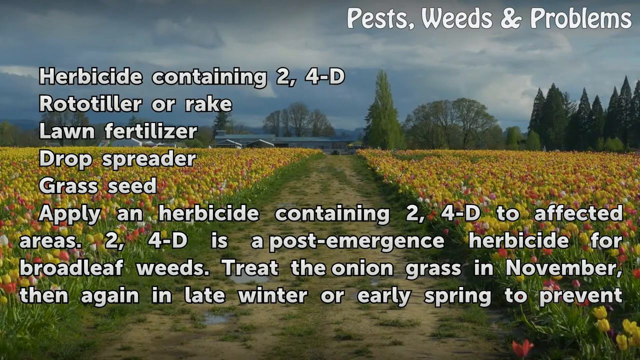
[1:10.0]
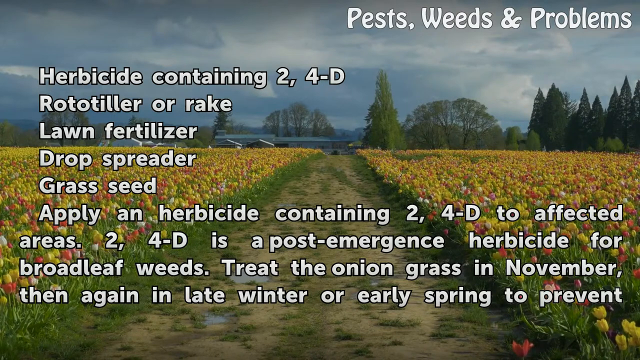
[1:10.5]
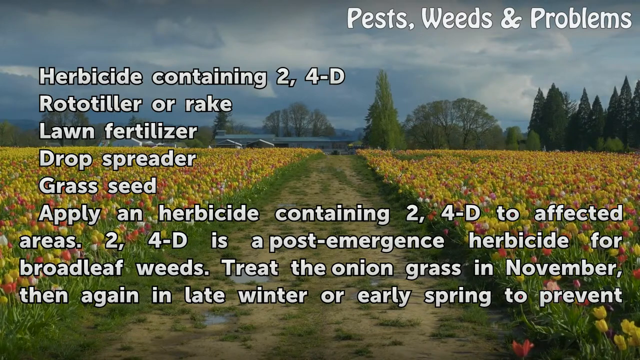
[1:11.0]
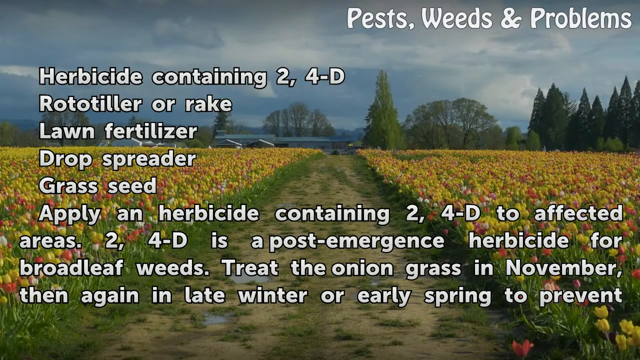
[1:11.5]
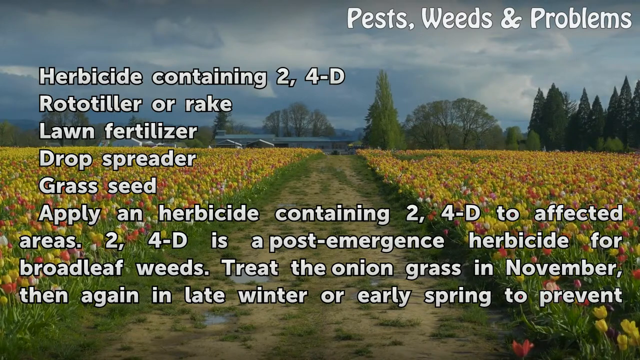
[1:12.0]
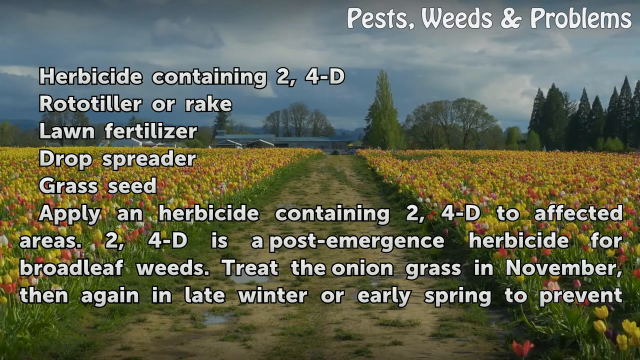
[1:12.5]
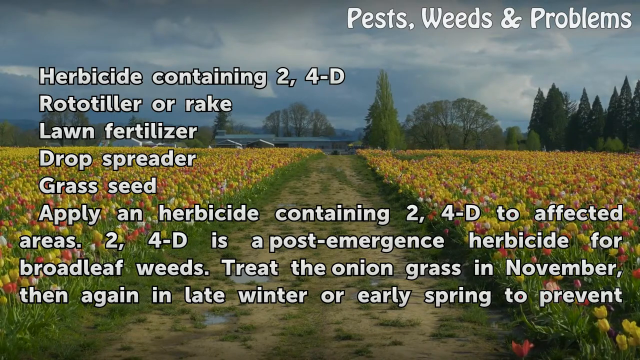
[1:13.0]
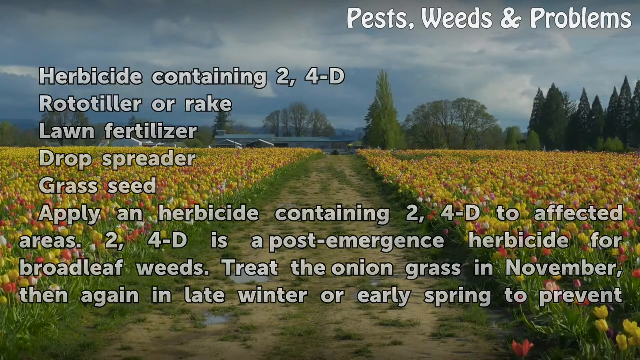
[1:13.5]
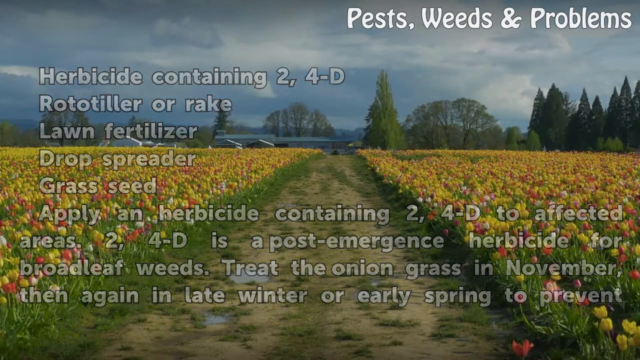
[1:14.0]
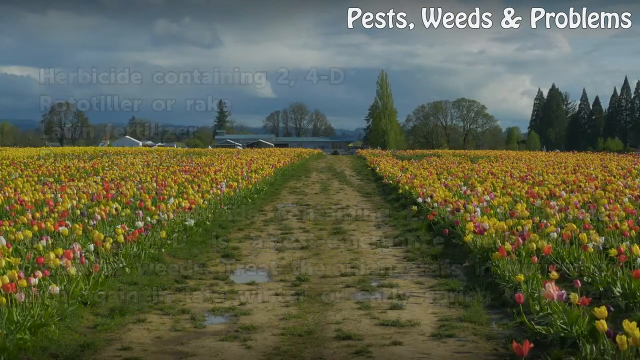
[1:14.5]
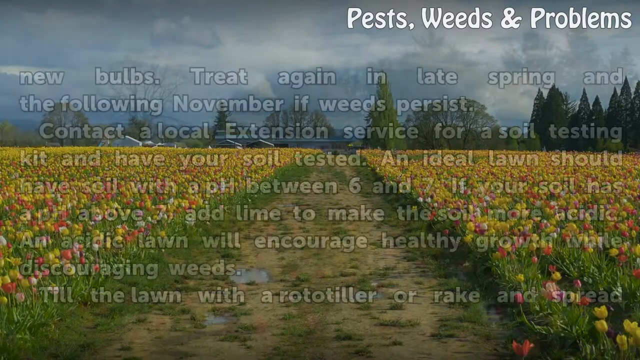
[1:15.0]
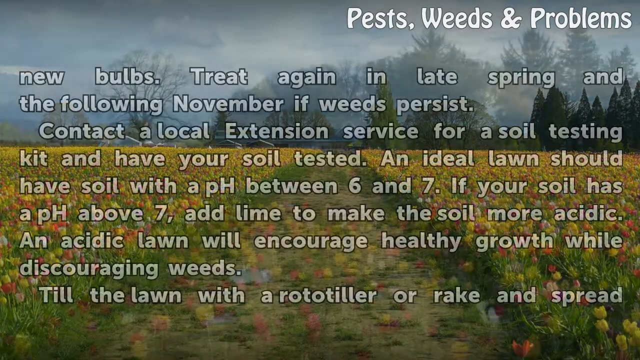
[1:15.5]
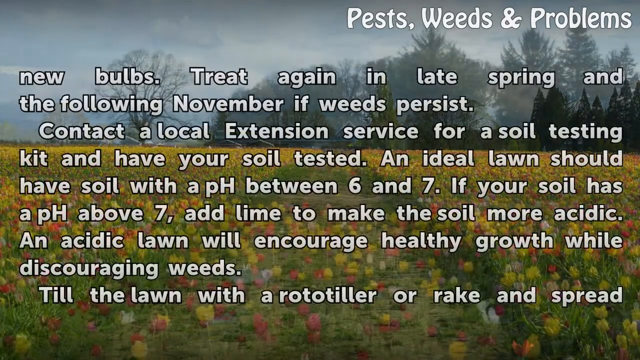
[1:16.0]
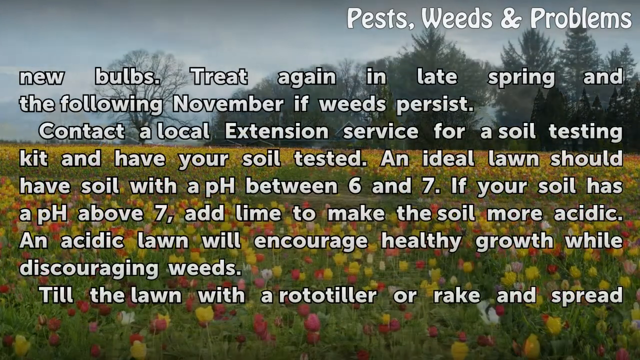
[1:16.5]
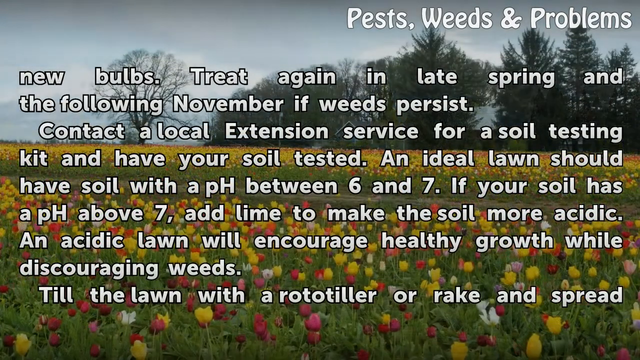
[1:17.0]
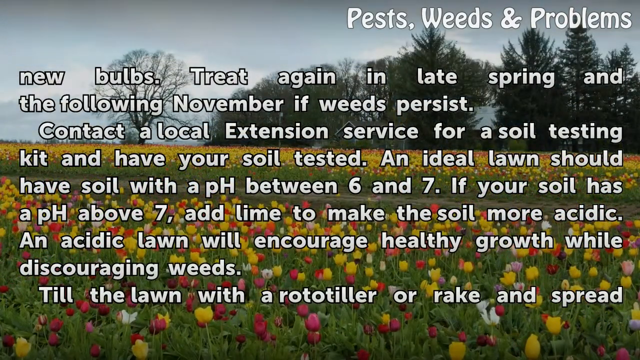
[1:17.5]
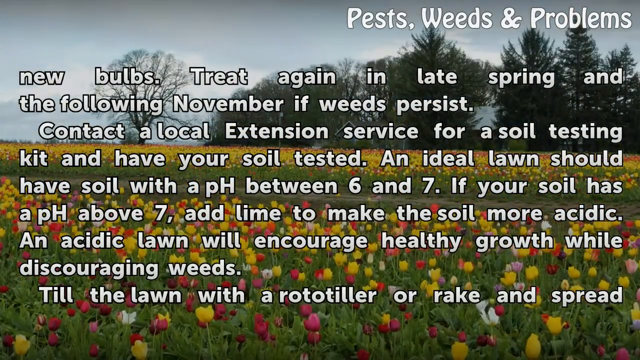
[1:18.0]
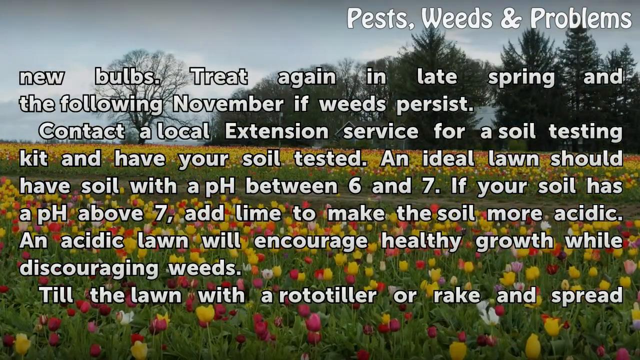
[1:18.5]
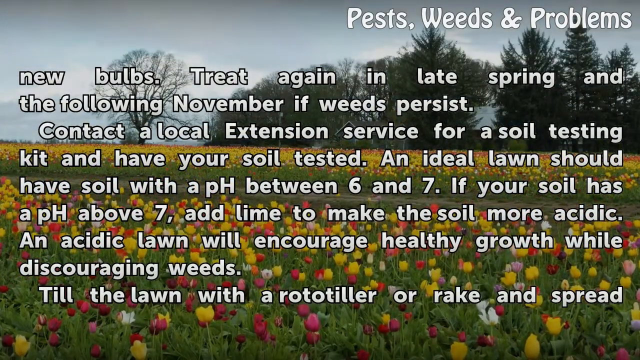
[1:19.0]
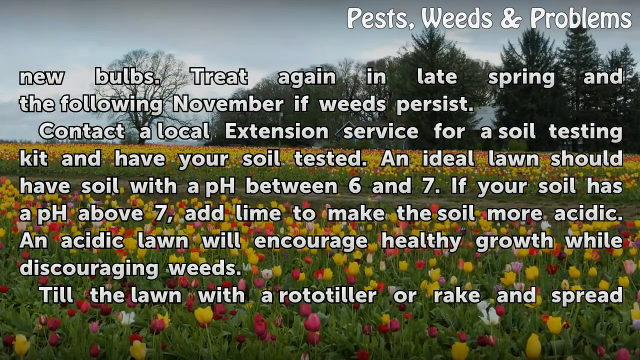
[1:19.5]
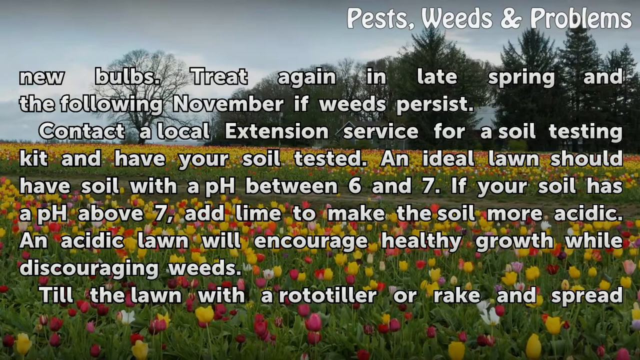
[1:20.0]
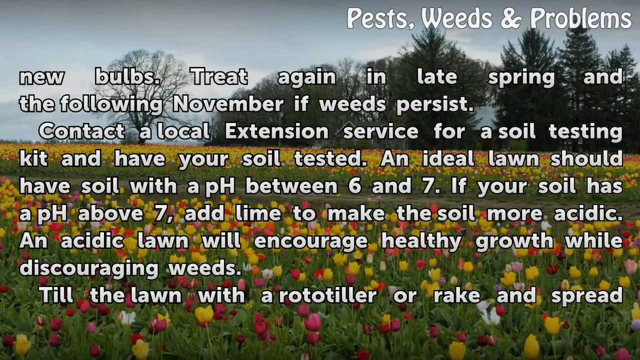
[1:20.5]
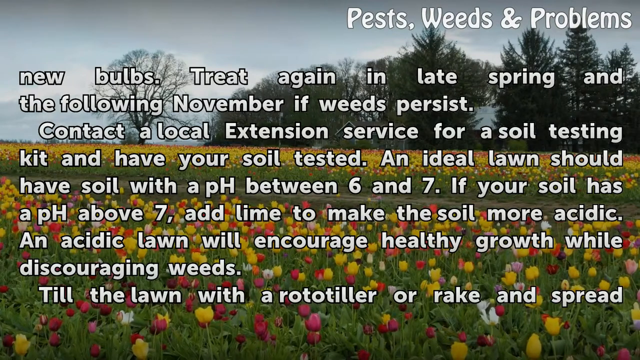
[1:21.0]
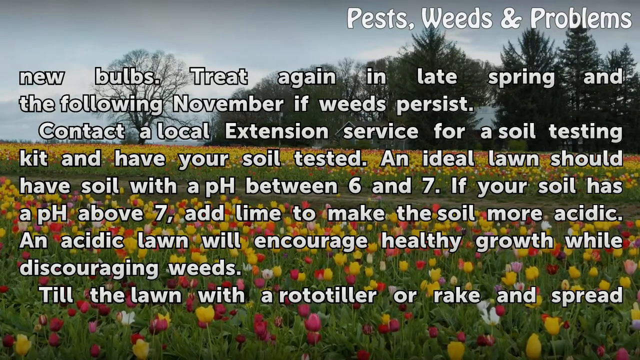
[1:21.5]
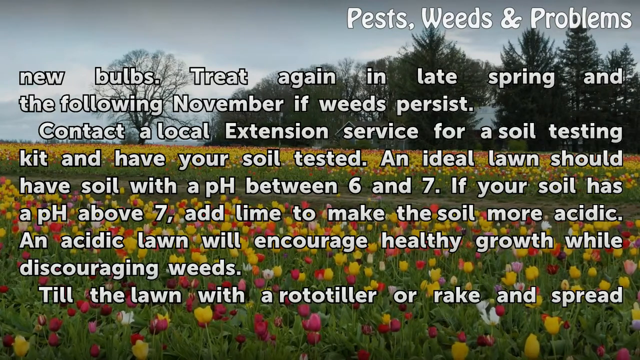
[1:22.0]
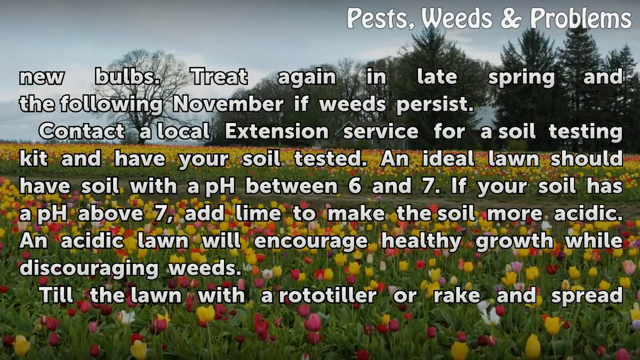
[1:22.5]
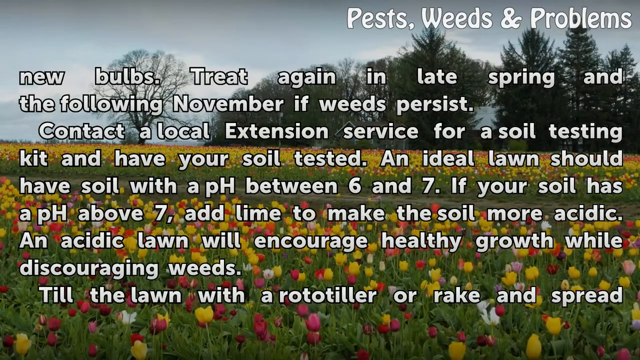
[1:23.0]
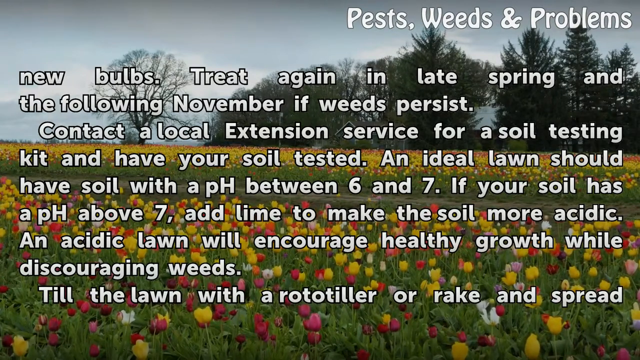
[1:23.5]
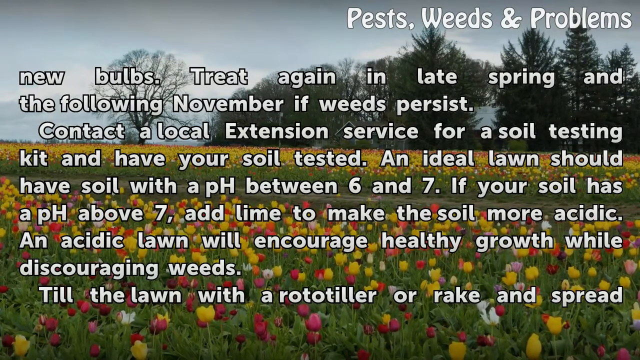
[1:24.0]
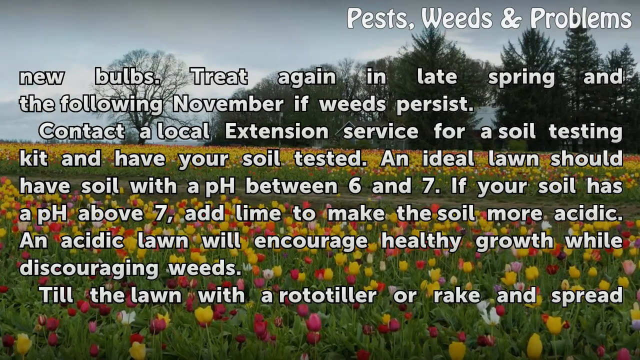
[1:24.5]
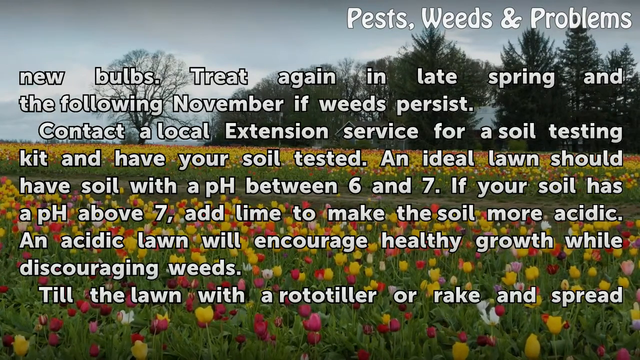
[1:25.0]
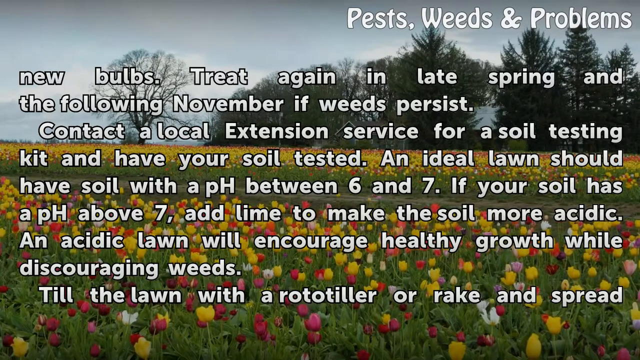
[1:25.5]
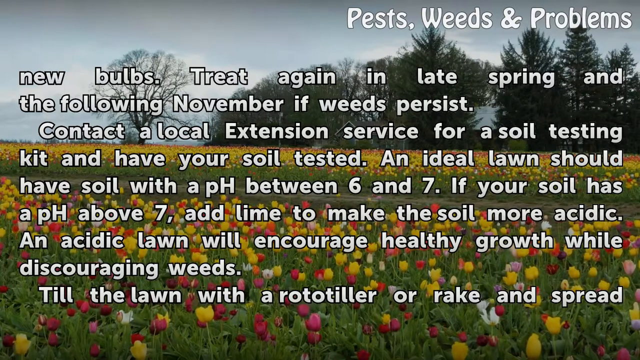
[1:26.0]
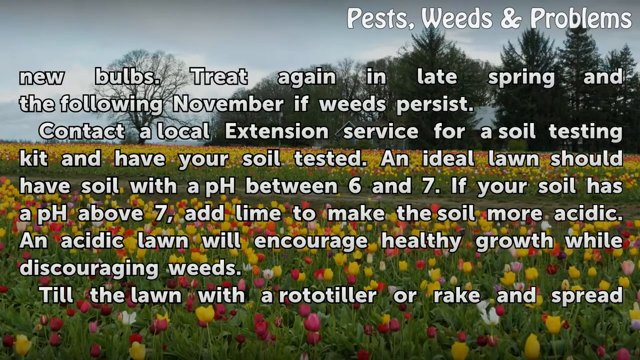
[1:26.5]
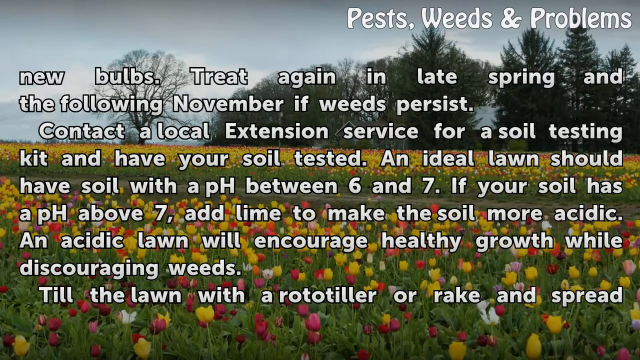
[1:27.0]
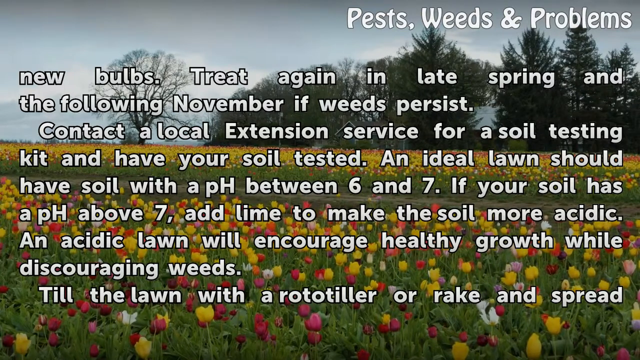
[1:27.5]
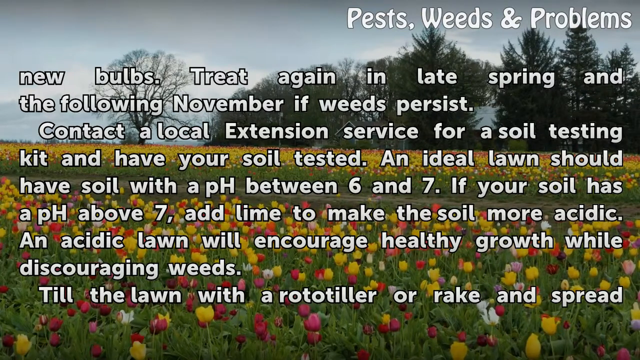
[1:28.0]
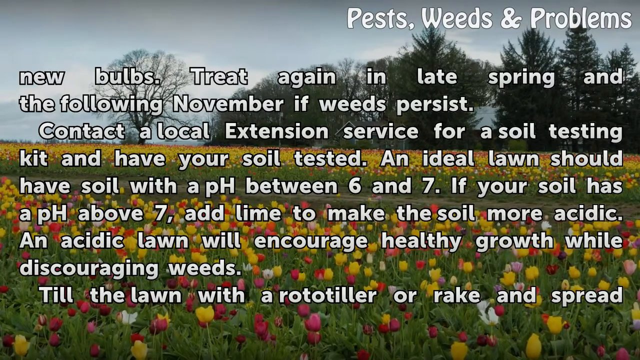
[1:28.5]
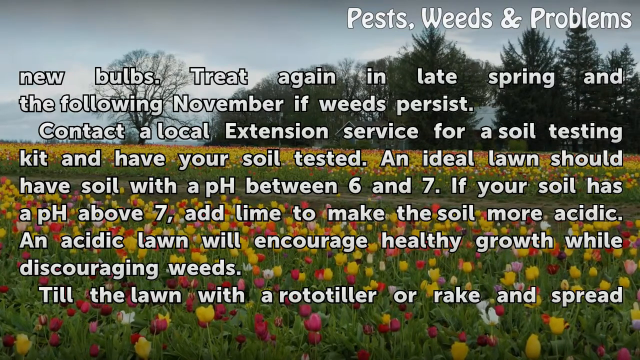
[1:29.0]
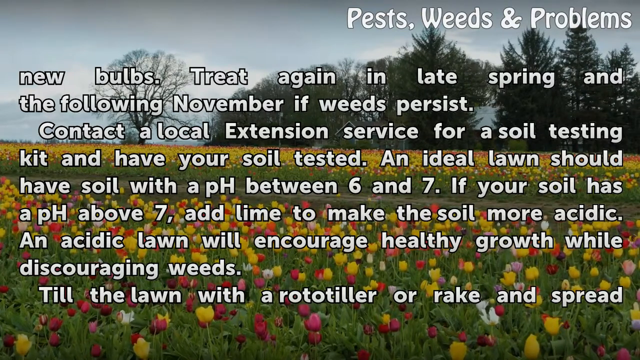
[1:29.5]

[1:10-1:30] The first part of the instructions stays on screen for a few more seconds, then slowly fades away. One or two seconds later, the video transitions to the same tulip field seen from a different side: the dirt trail between the two fields is still visible, but where the view was earlier from the middle of it, it is now from the left side. More text slowly appears, continuing the previous text: "new bulbs, then treat again in late spring and the following November if weeds persist. Contact a local extension service for a soil testing kit and have your soil tested. An ideal lawn should have soil with a pH between 6 and 7. If your soil has a pH above 7, add lime to make the soil more acidic. An acidic lawn will encourage healthy growth while discouraging weeds." The text and this view of the tulip field stay on screen for several more seconds.